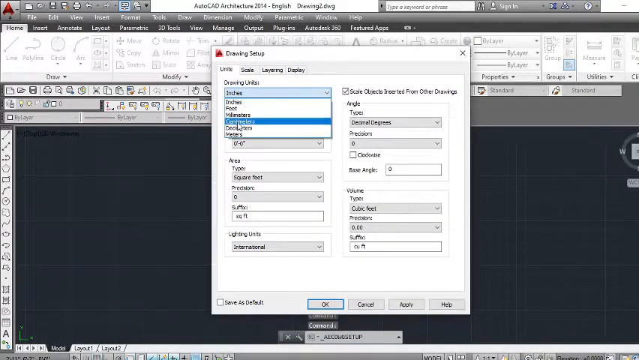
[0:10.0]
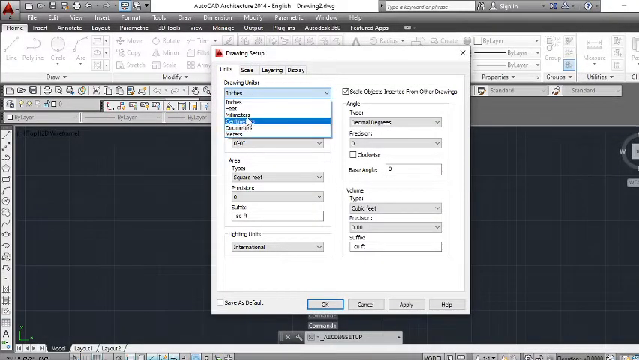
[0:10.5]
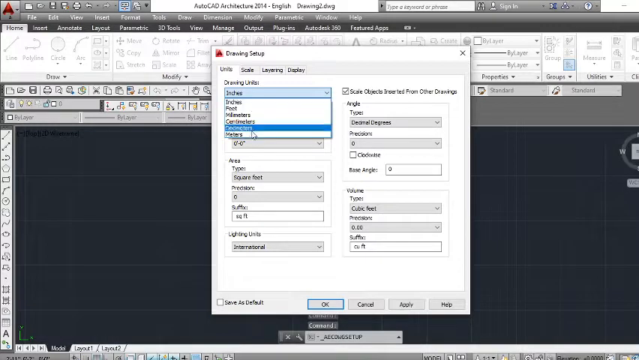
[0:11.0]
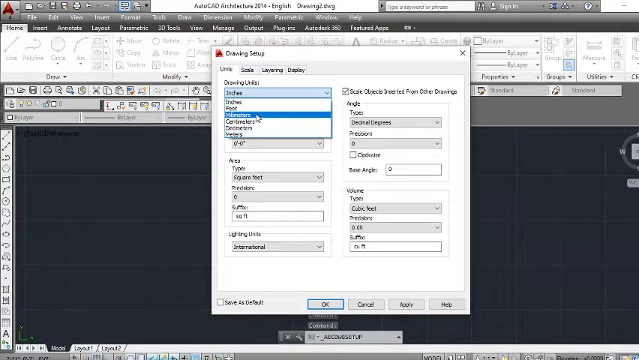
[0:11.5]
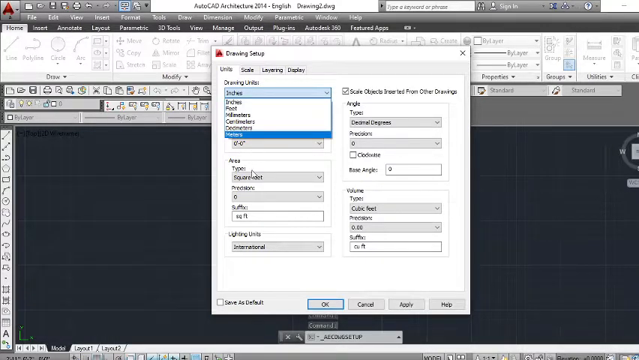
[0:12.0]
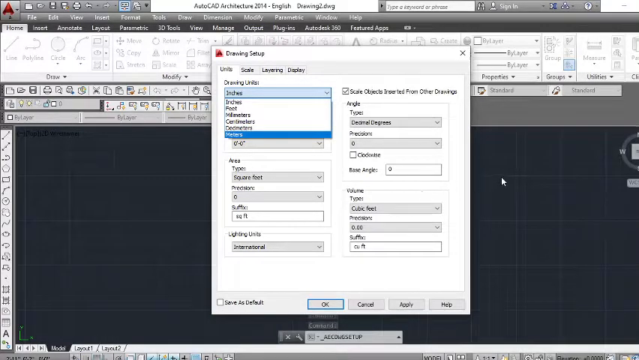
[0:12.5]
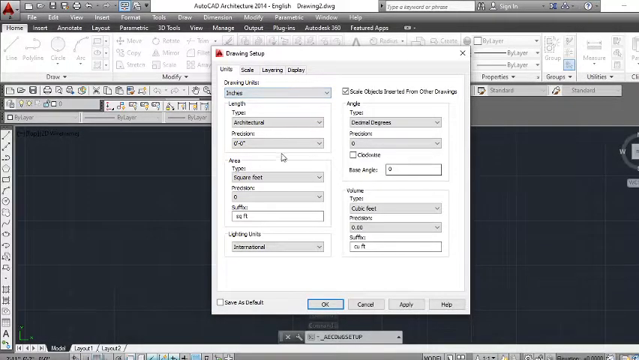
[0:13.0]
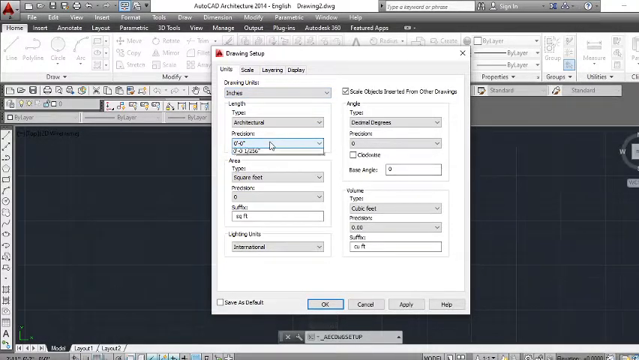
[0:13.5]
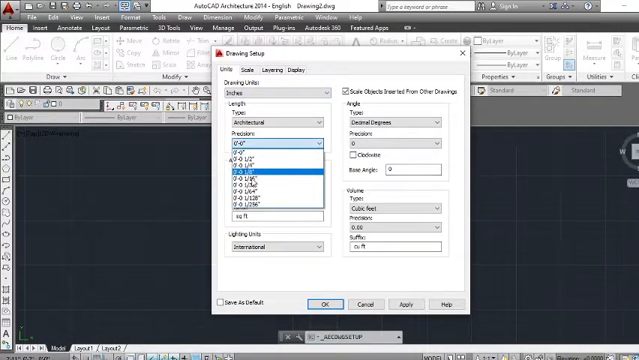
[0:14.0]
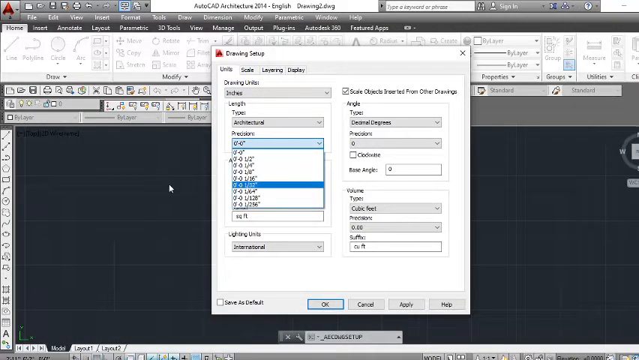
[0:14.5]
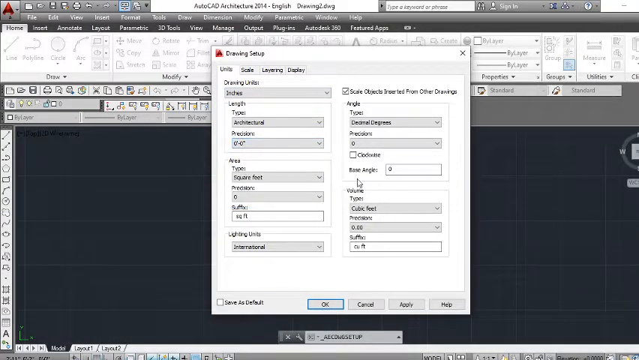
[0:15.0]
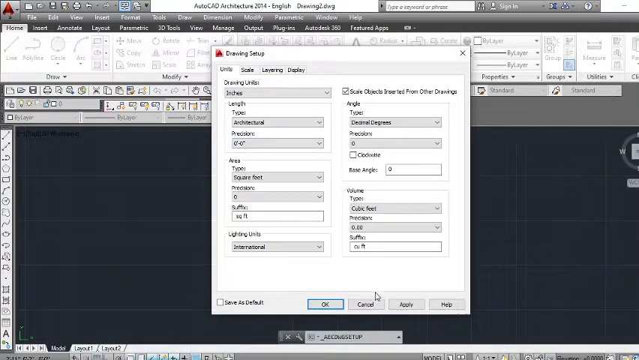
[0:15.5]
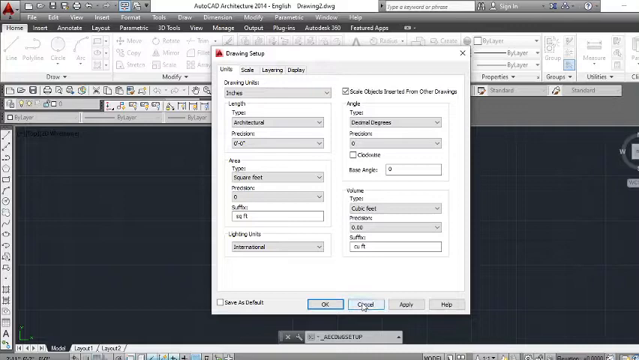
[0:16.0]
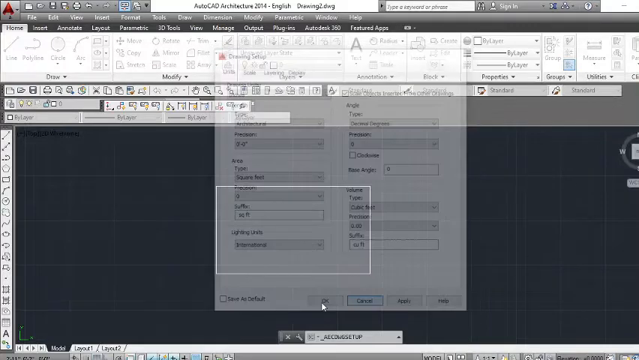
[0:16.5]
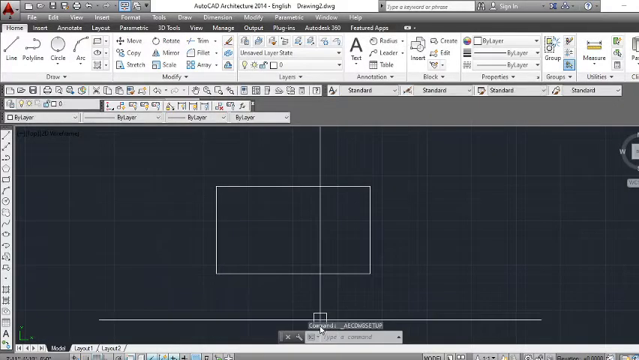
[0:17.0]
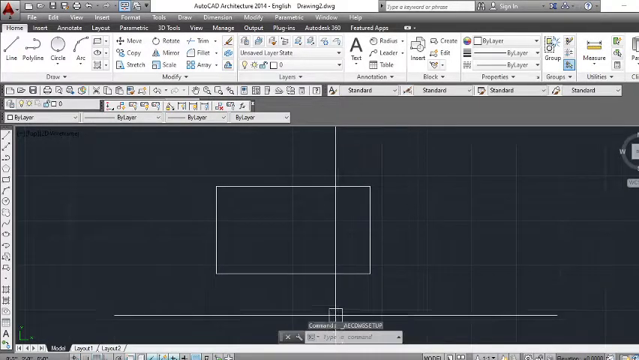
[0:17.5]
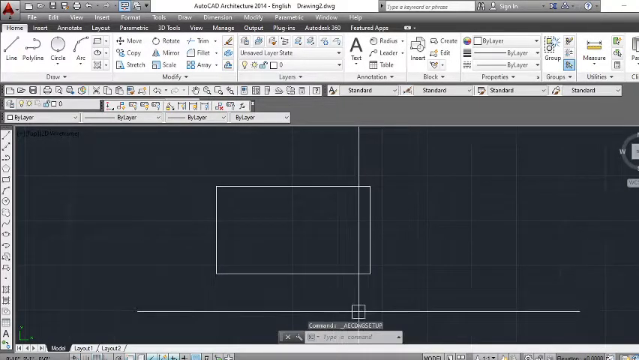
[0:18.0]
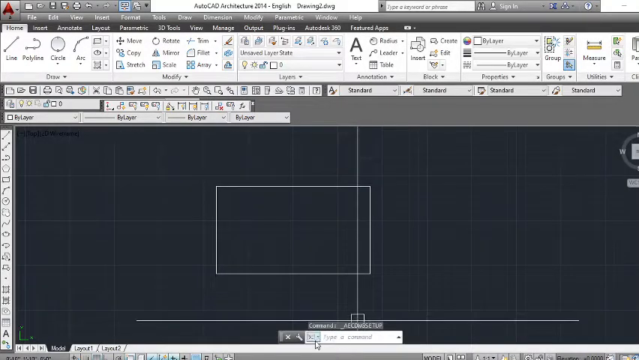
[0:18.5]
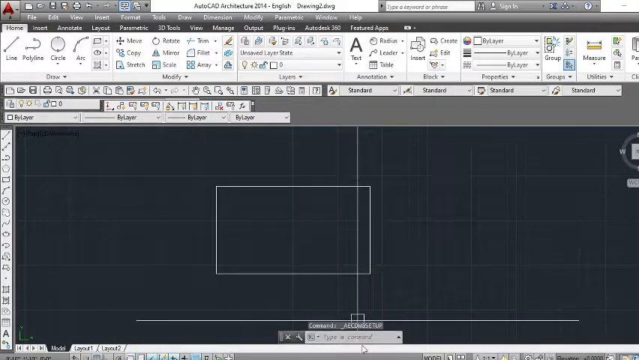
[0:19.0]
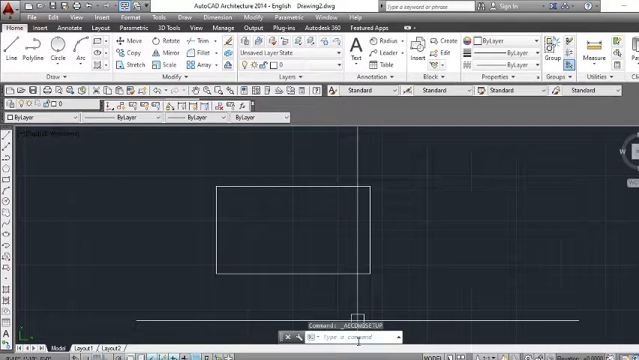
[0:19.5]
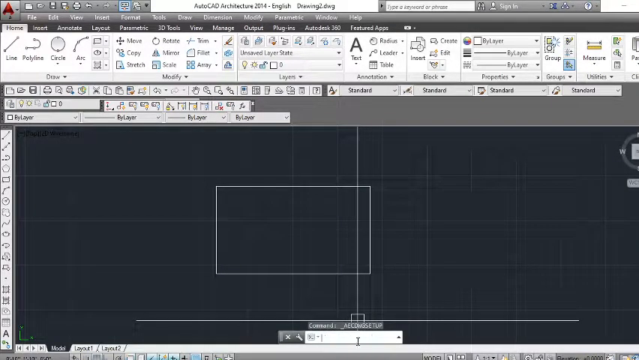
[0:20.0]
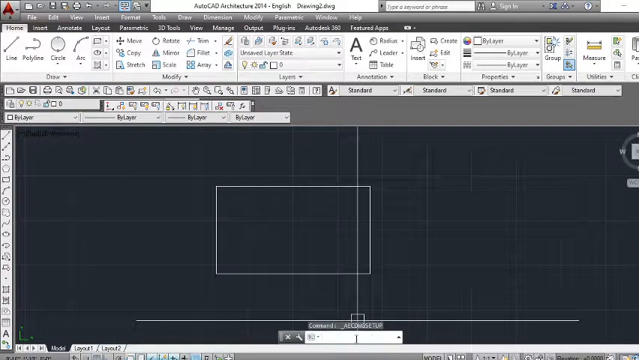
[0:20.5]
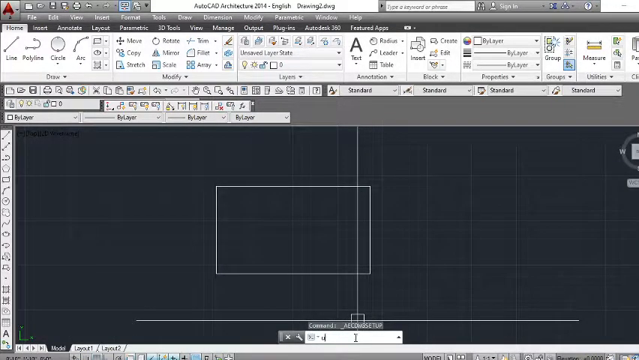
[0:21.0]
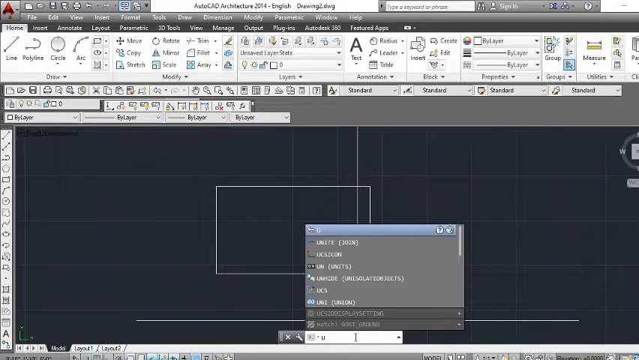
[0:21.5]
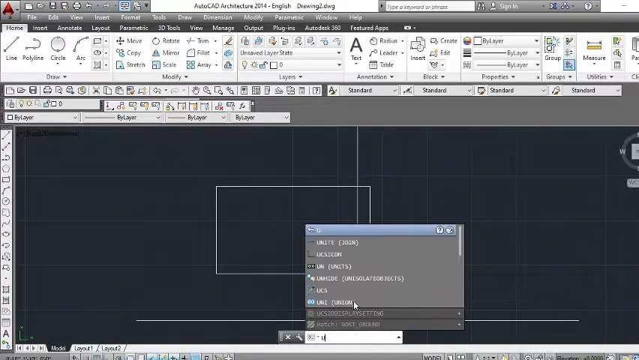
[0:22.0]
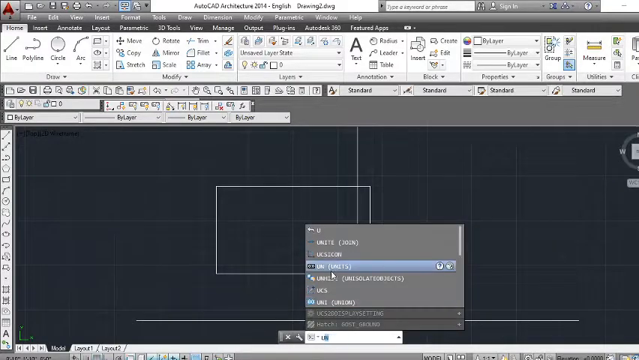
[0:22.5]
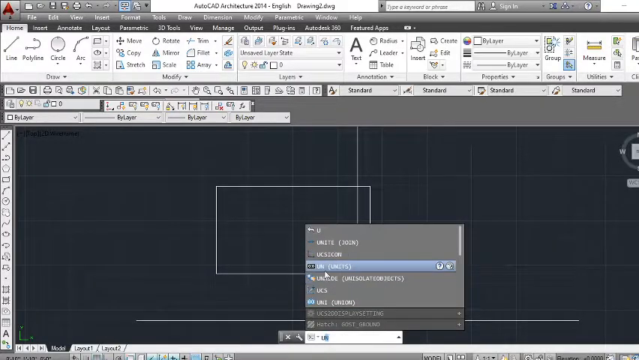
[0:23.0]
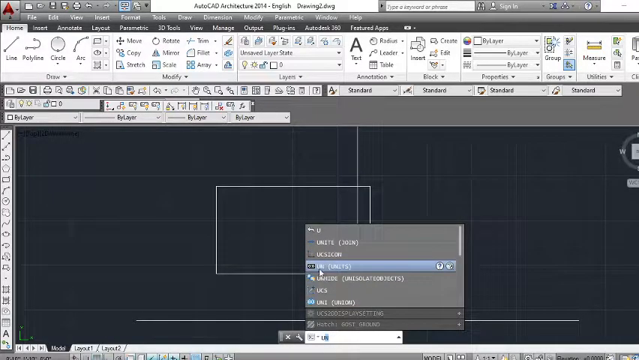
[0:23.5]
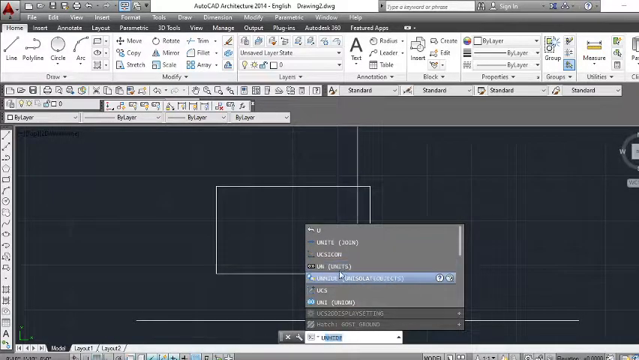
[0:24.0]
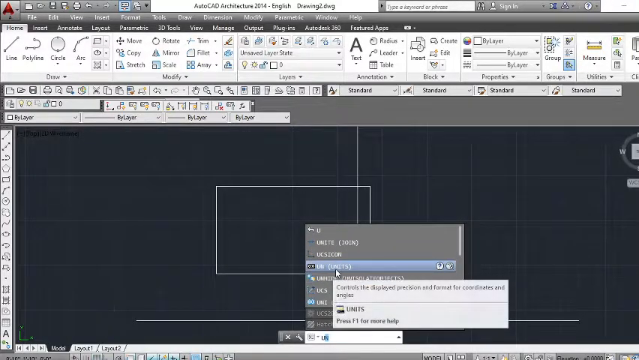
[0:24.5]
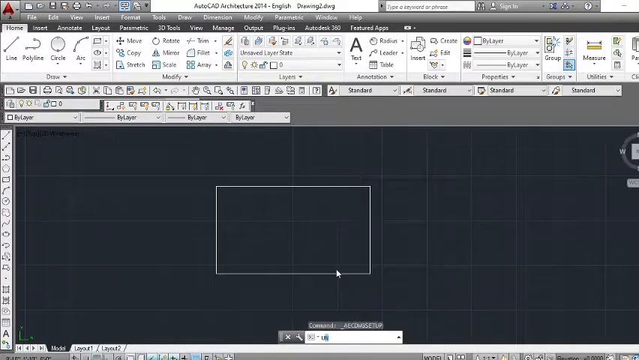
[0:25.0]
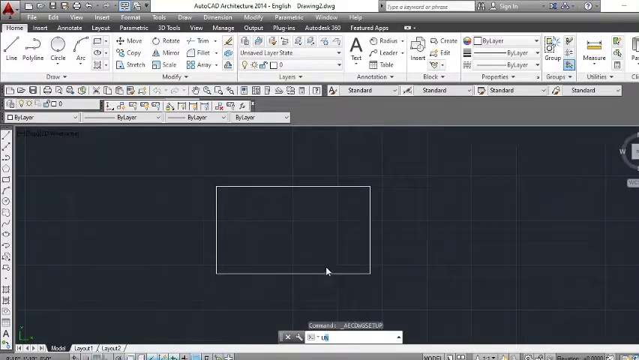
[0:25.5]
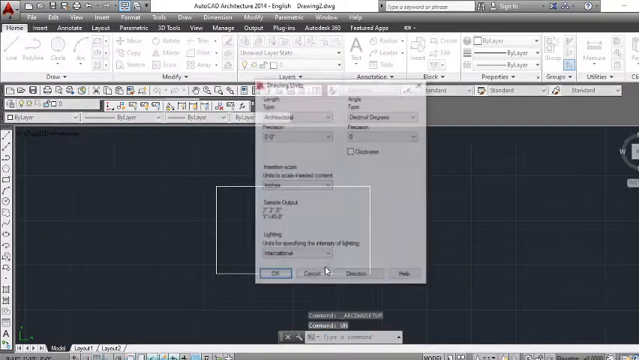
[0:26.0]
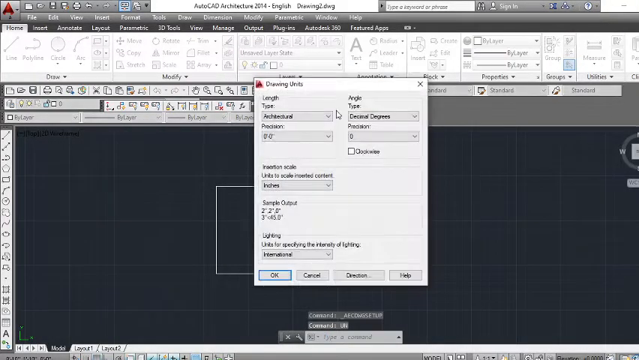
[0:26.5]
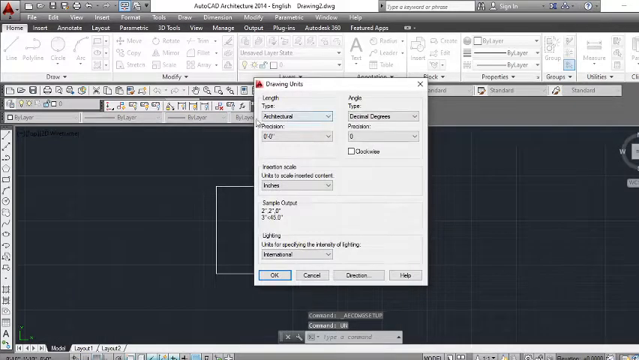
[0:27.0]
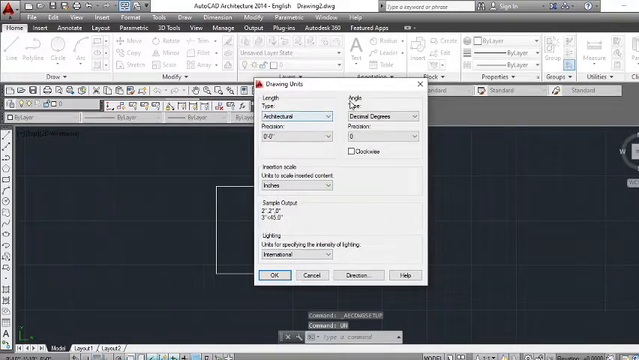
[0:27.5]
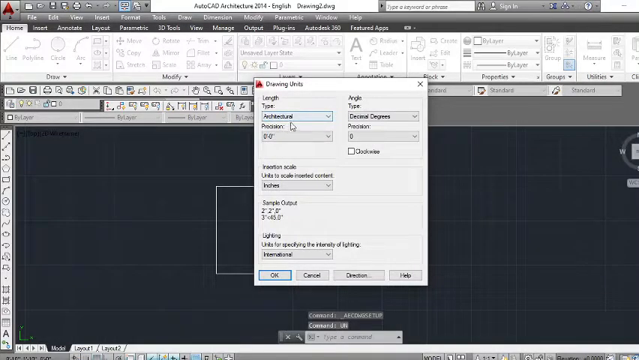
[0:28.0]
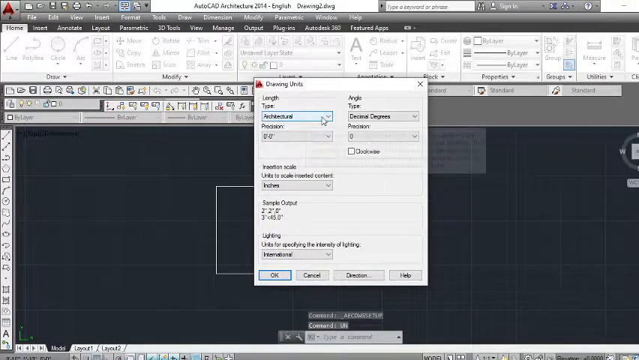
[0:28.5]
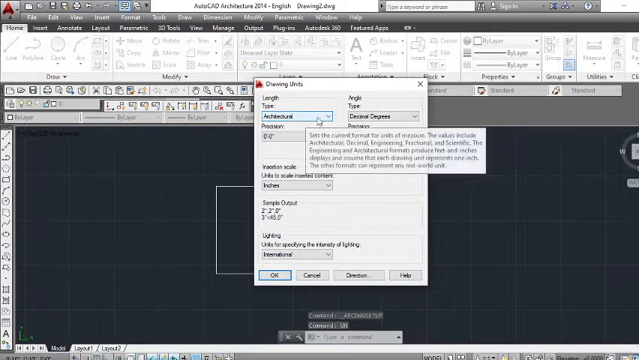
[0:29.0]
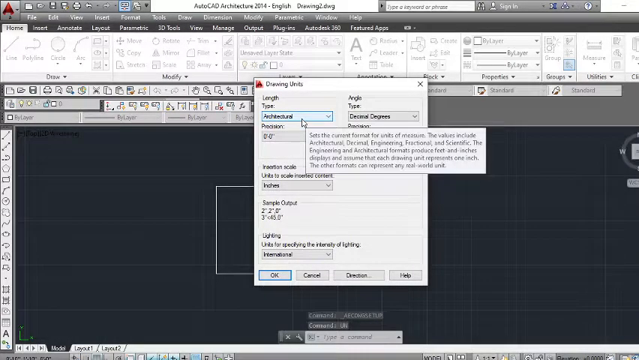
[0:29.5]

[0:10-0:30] A computer screen on a desktop or laptop monitor shows a black area that looks like a space for drawing or painting, like a notepad program. A menu is open with items highlighted. The cursor moves up and down, selects several other drop-down menus, and then closes them. A square has been drawn on the screen. There is an X, another menu opens, and the cursor moves all around, as if someone is explaining how to do something. Along the top of the screen are many icons and buttons, including two swords, and more icons and buttons run down the left side, looking like lines, circles and other selectable items. None of the words are legible.